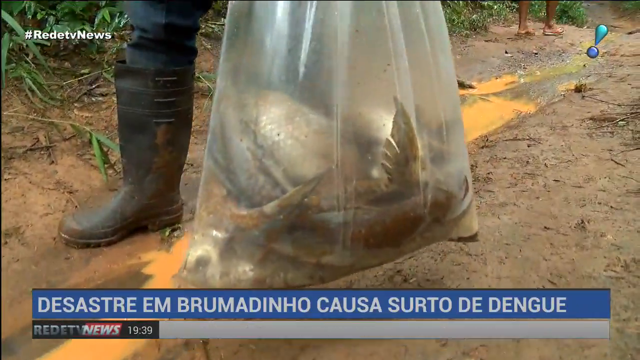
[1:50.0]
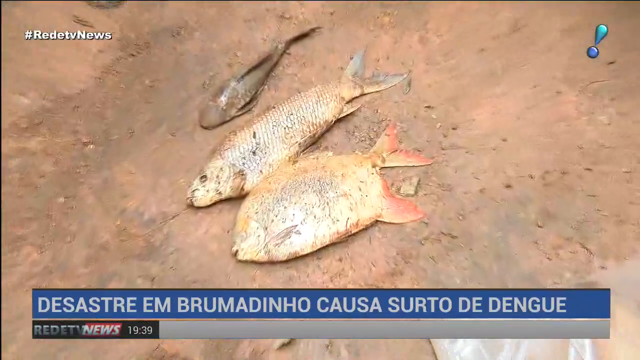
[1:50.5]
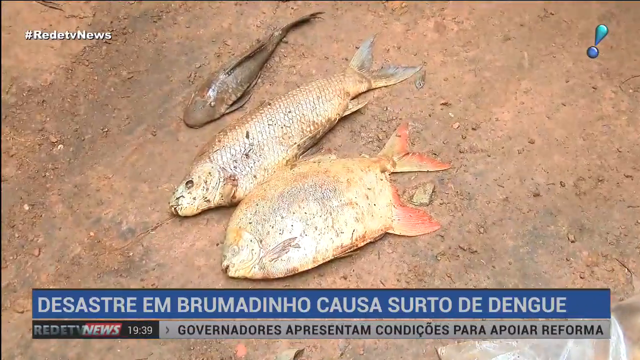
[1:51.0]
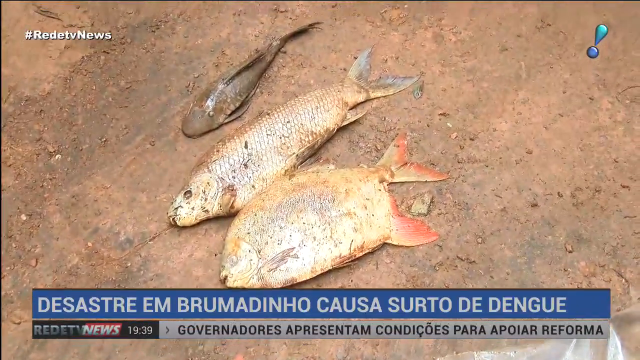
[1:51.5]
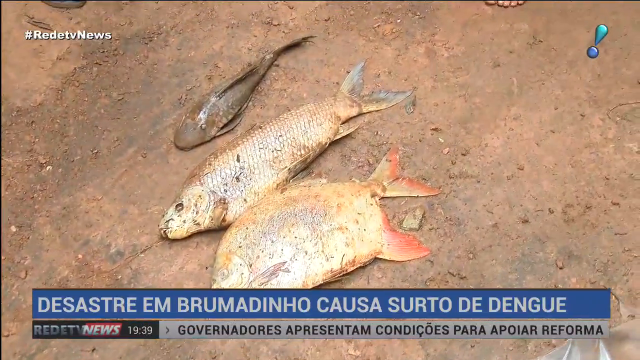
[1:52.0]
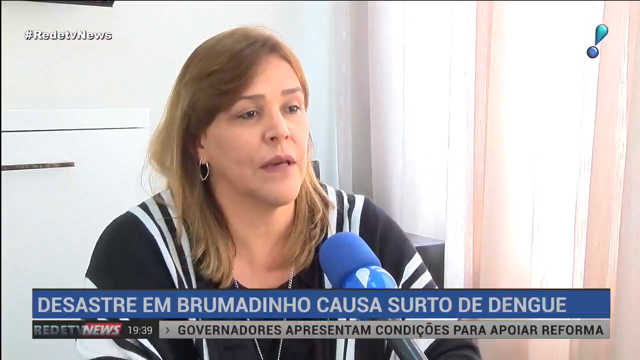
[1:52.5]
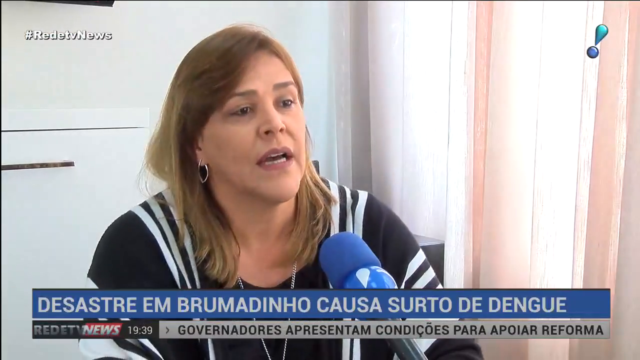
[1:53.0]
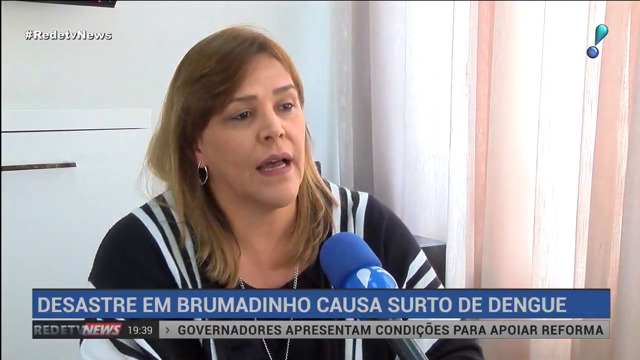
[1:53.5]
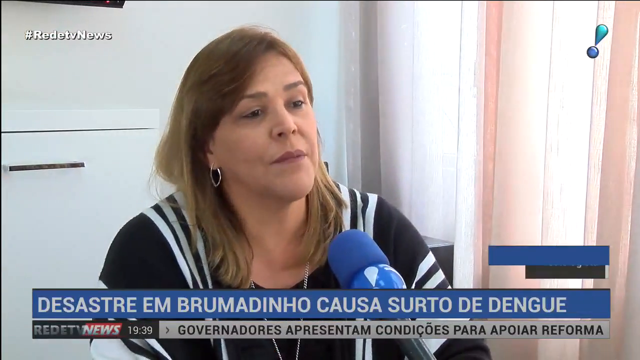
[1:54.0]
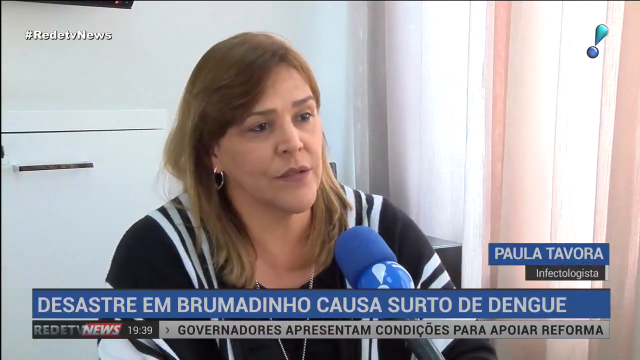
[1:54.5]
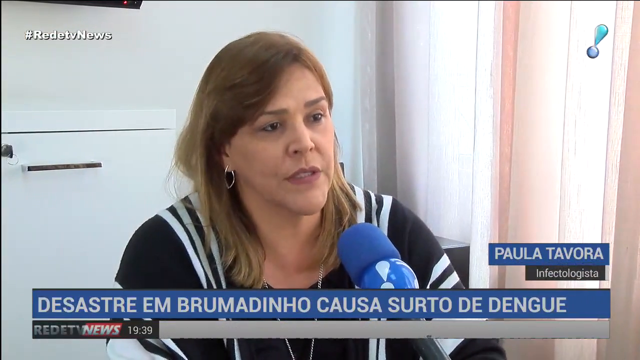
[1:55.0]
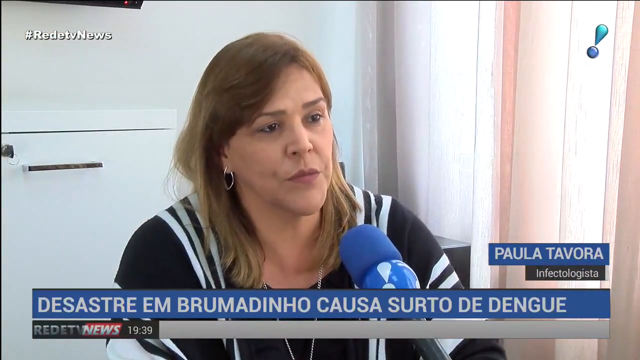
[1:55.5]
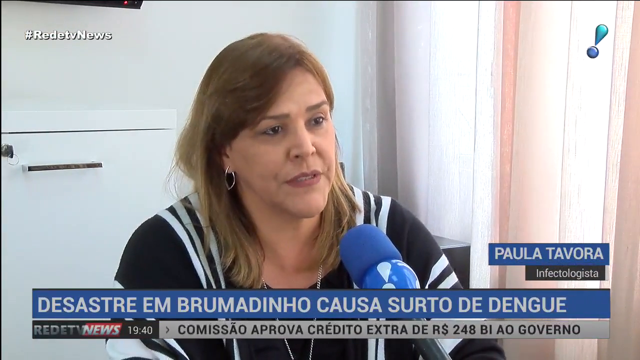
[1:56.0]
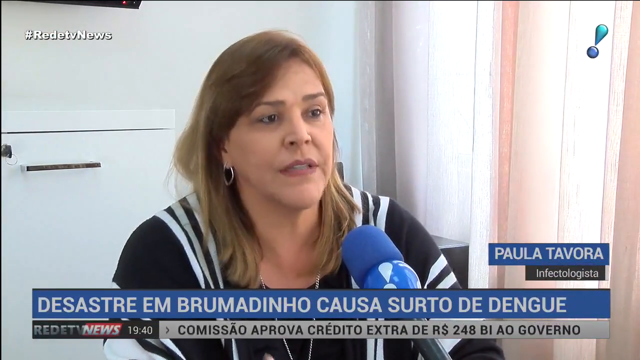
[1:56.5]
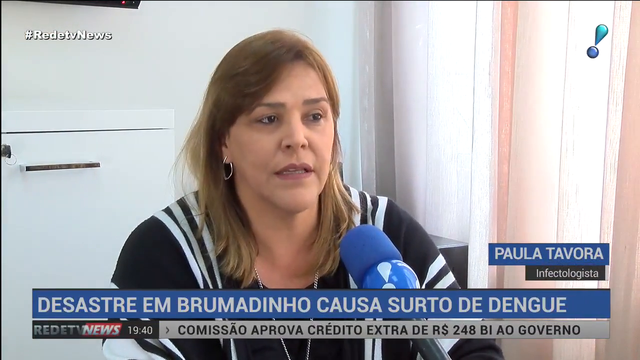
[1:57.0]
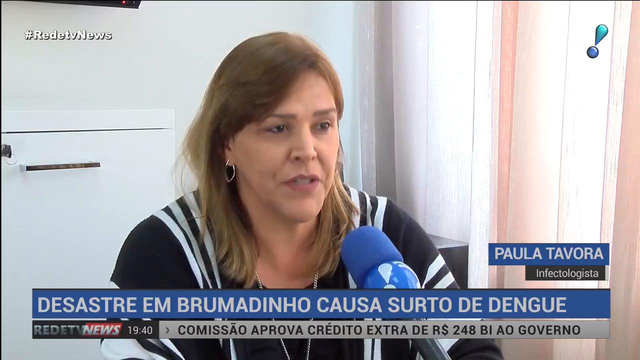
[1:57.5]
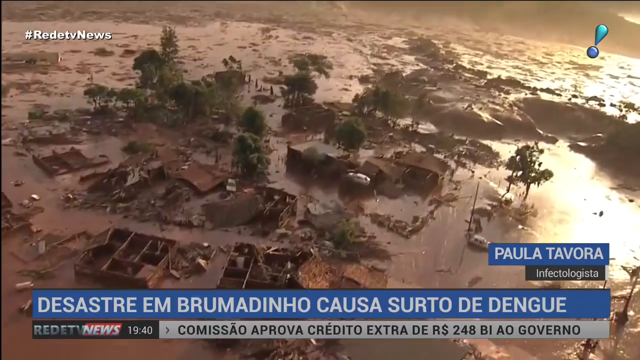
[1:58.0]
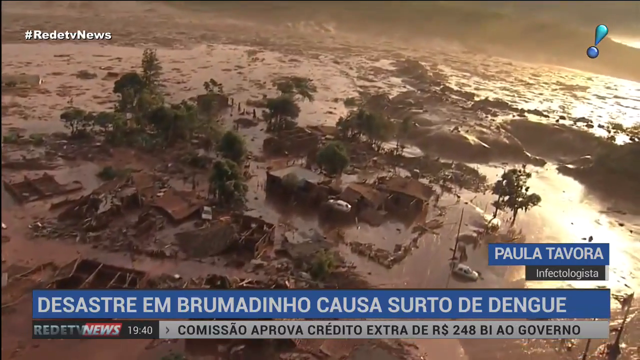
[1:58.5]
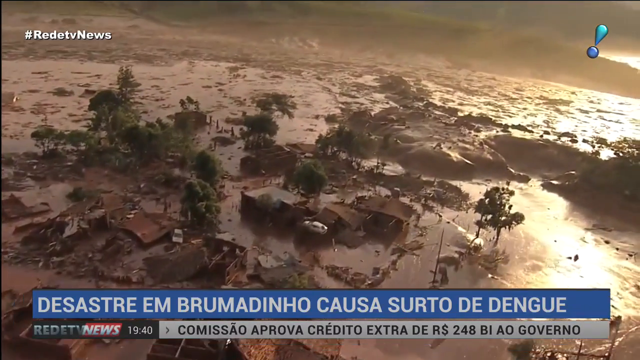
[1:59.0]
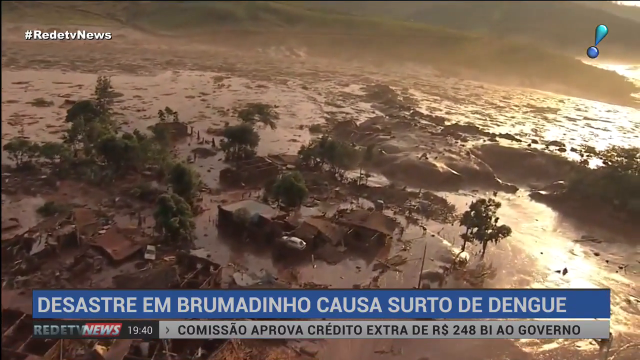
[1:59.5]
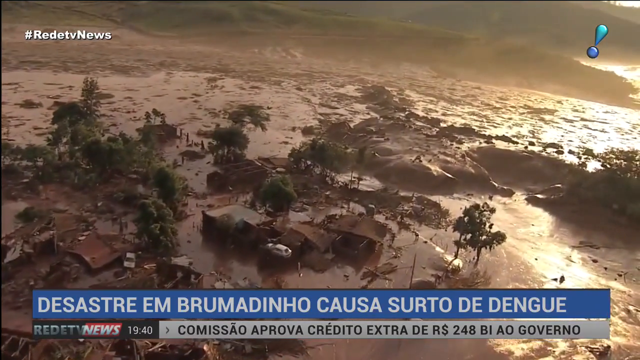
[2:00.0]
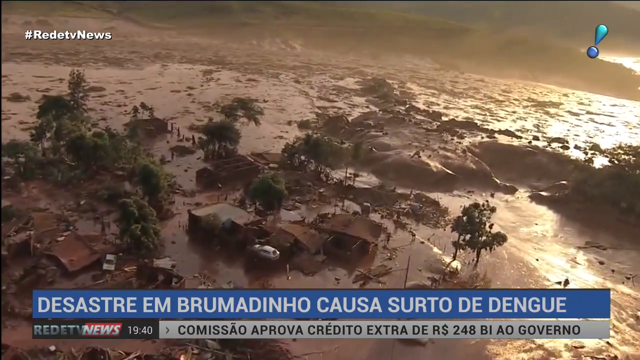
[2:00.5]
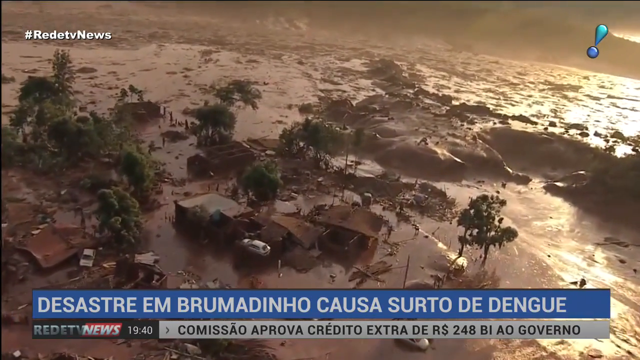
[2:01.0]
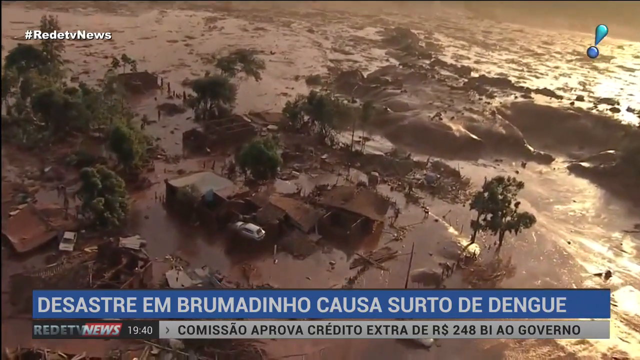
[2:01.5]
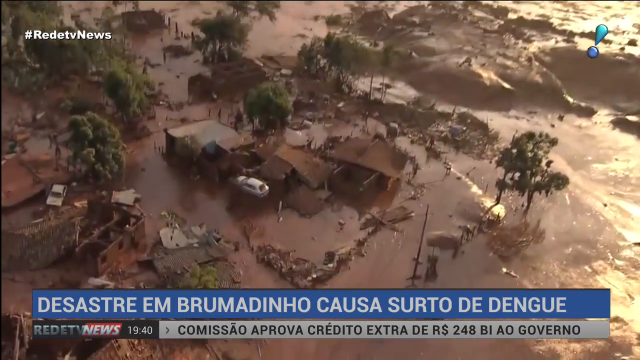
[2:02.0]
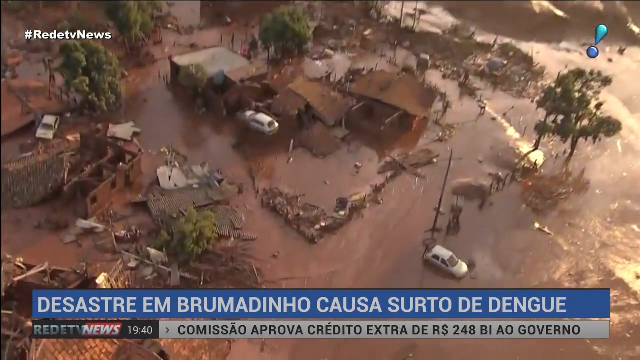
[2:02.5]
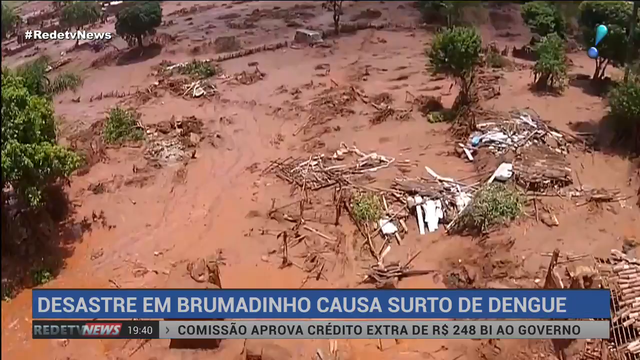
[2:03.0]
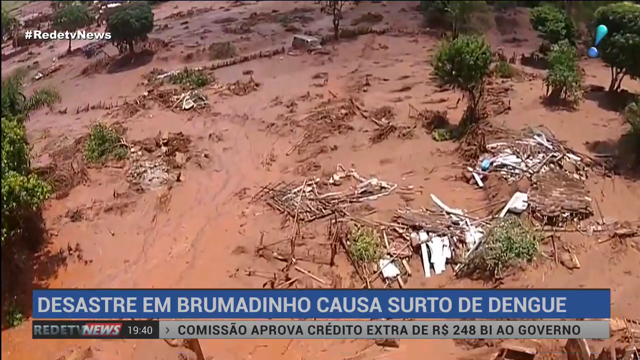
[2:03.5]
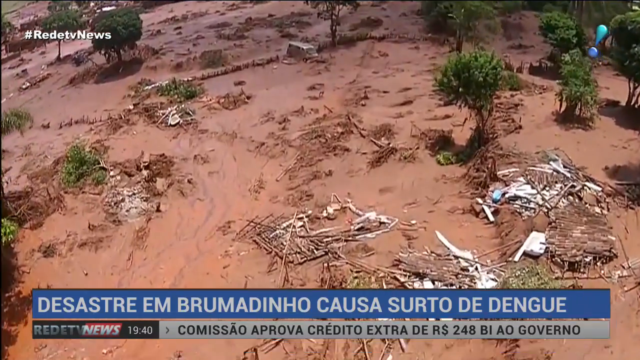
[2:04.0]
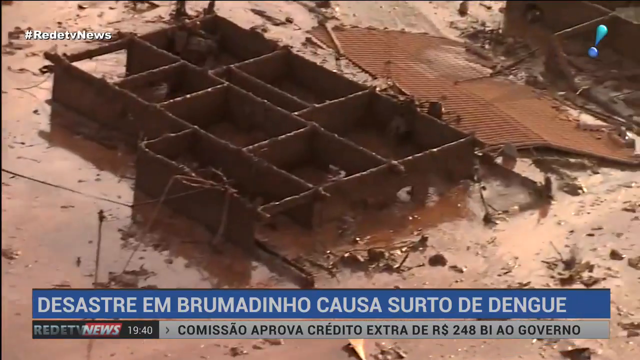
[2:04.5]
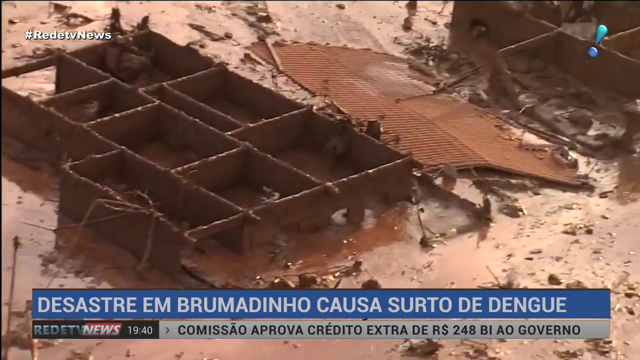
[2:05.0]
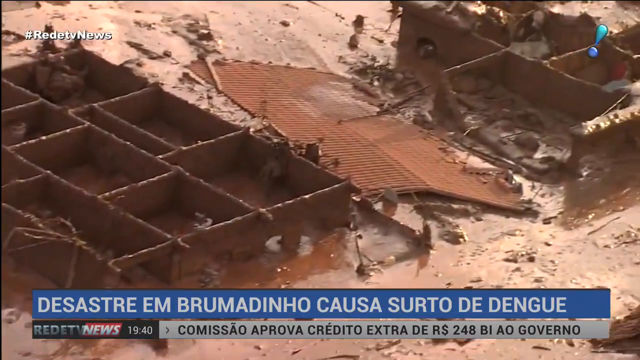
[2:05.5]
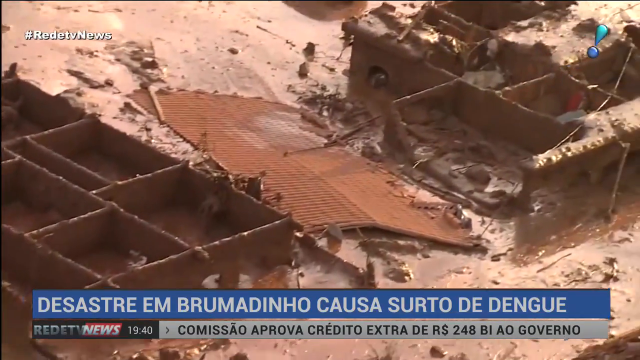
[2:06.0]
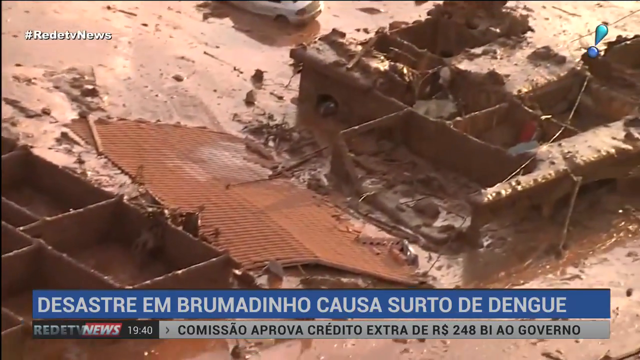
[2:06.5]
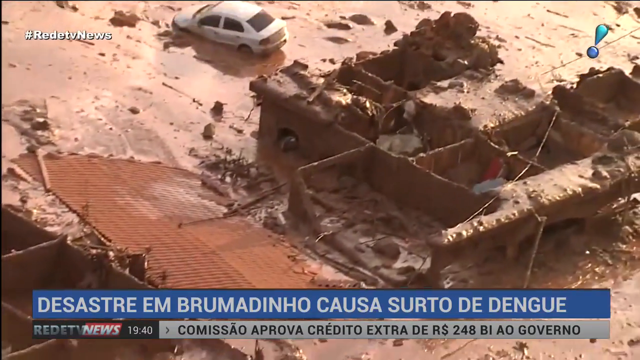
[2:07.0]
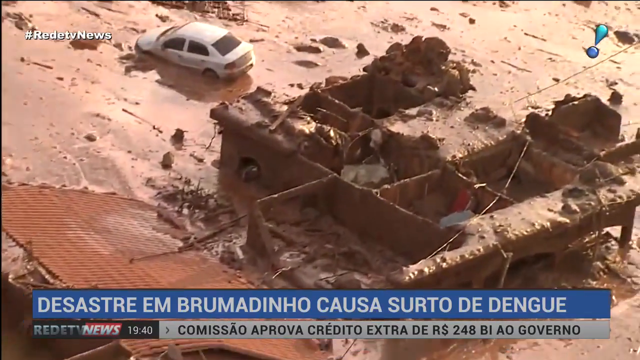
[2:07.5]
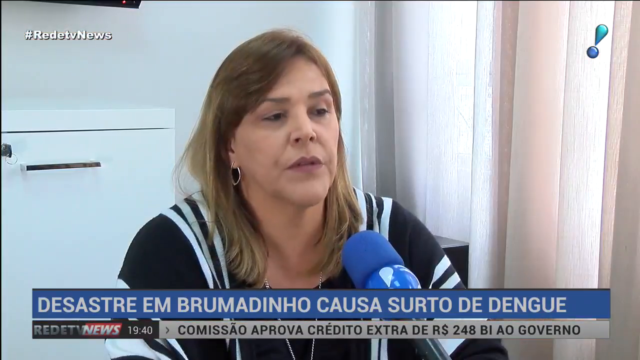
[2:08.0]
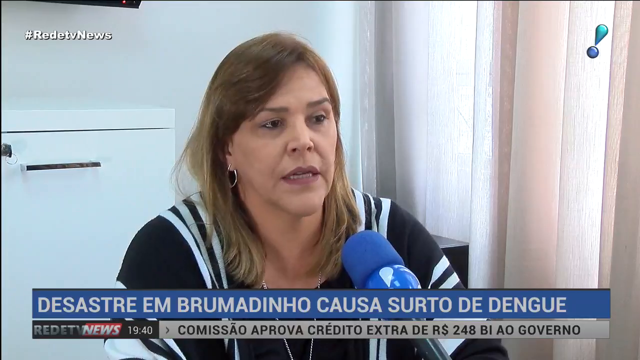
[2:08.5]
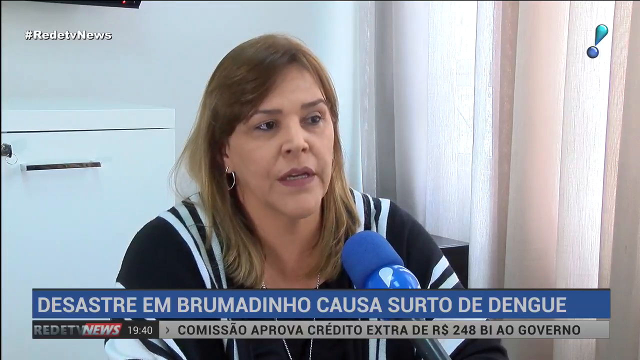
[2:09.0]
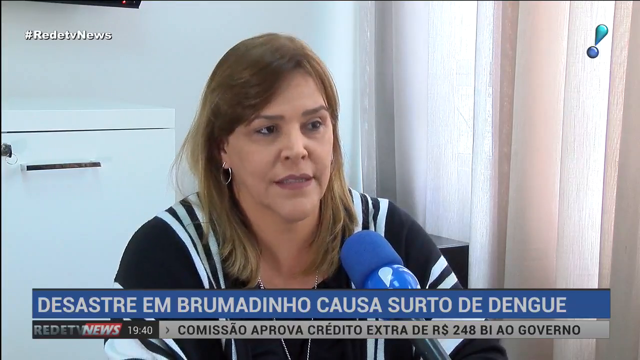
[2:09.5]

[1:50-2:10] Three dead fish are shown, followed by an interview with an infectologist named Paula Tavora, an older woman in her 40s or 50s. She is in her office, wearing a black shirt with white stripes, and has shoulder-length hair; she is described as a white American. Footage shows what looks like an area that might have been hit by a hurricane or a storm: a lot of mud, dirt, garbage and broken debris, dead fish, and houses that appear to sit in dirt, mud and water, as if water came up, receded and washed all kinds of things ashore. Cars are in the mud among some houses and a lot of garbage.